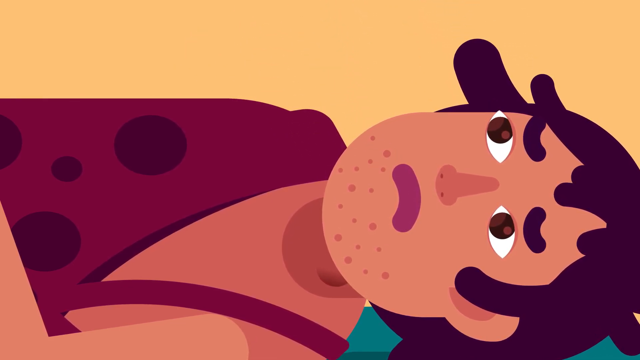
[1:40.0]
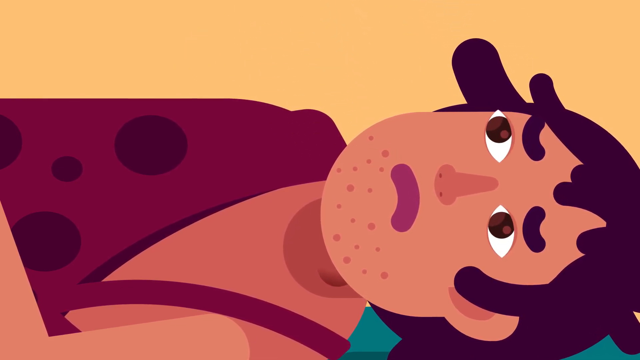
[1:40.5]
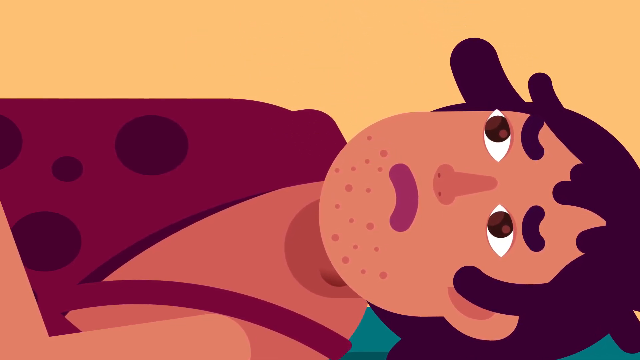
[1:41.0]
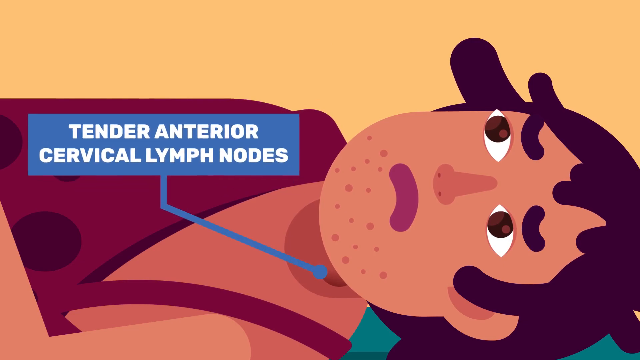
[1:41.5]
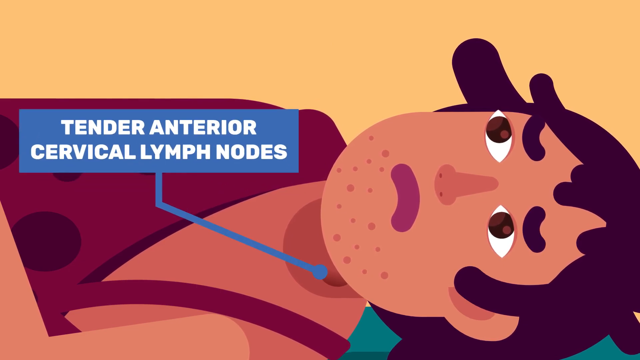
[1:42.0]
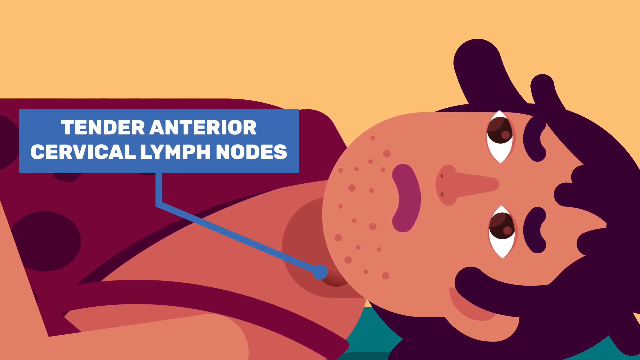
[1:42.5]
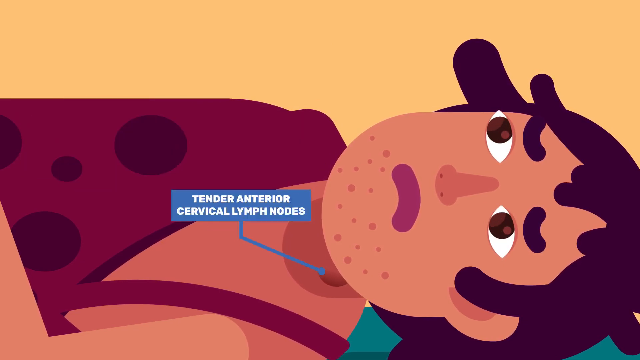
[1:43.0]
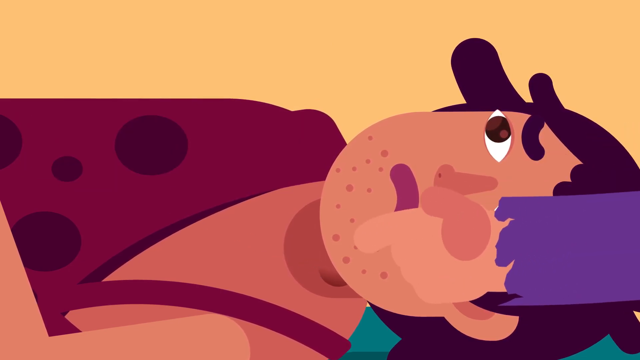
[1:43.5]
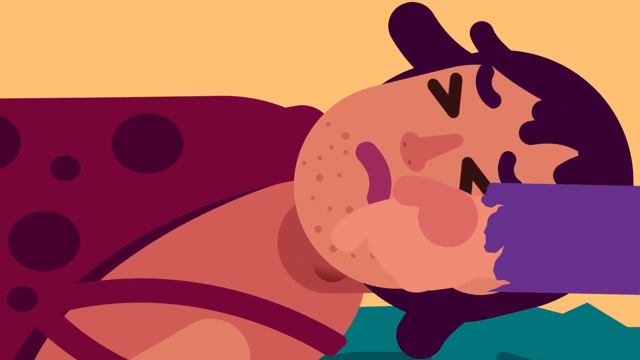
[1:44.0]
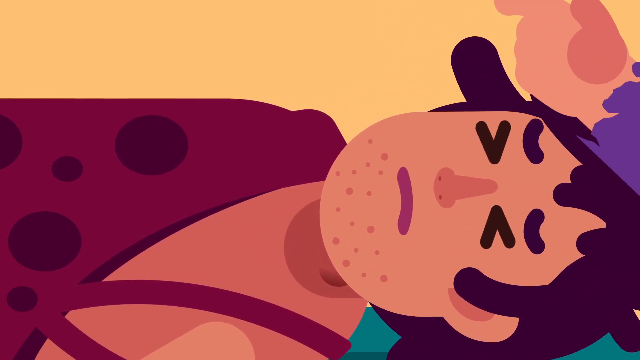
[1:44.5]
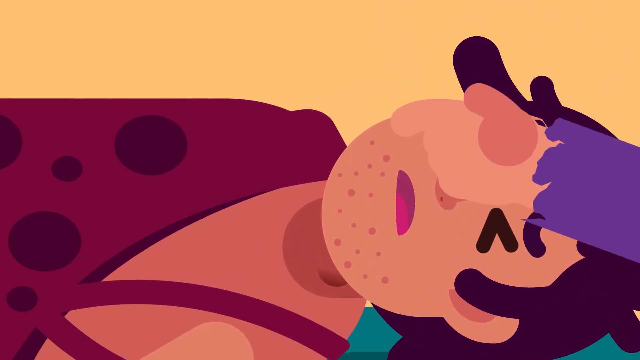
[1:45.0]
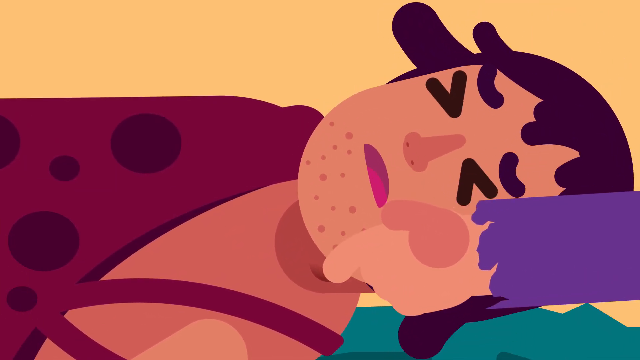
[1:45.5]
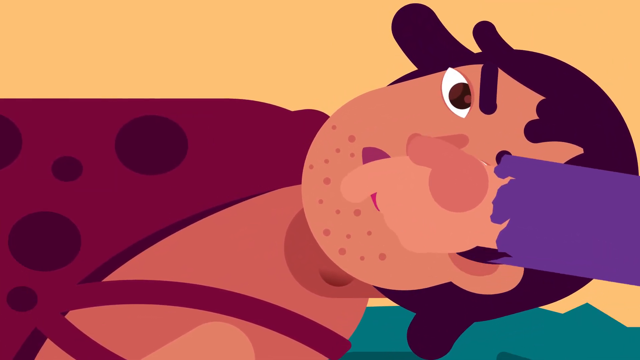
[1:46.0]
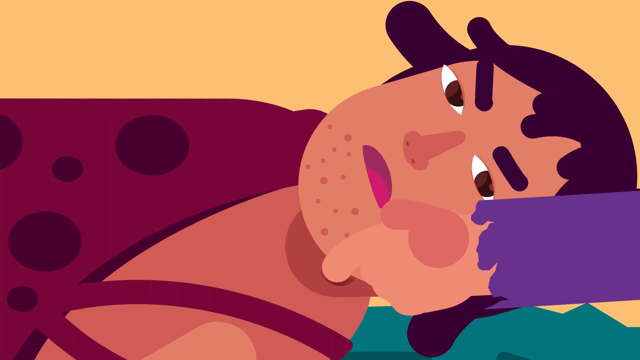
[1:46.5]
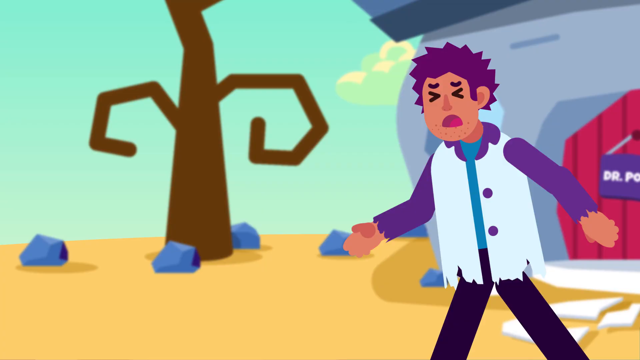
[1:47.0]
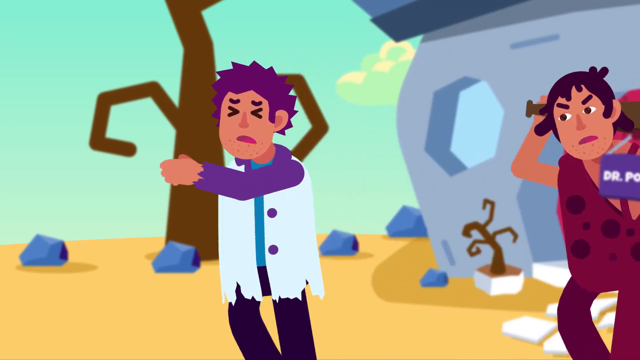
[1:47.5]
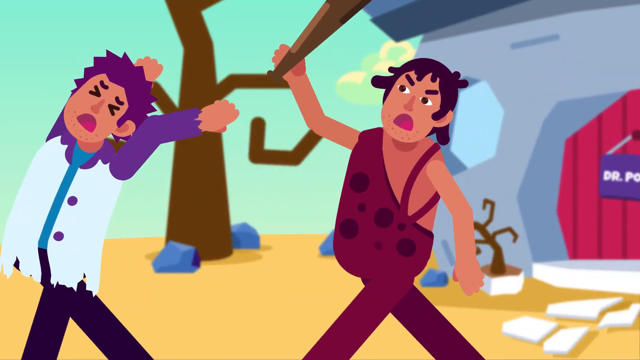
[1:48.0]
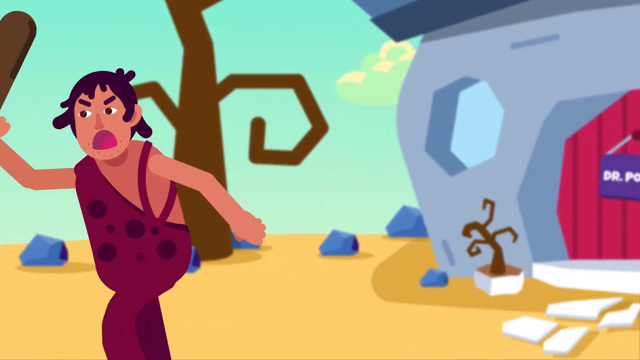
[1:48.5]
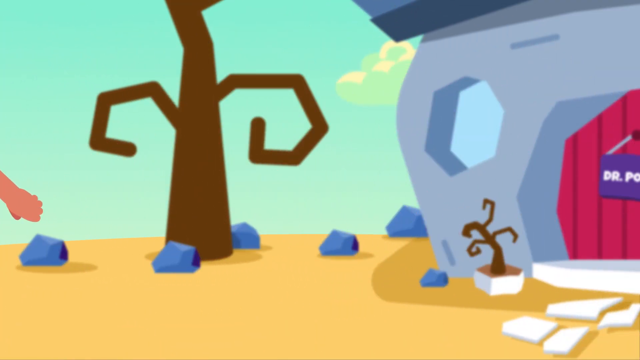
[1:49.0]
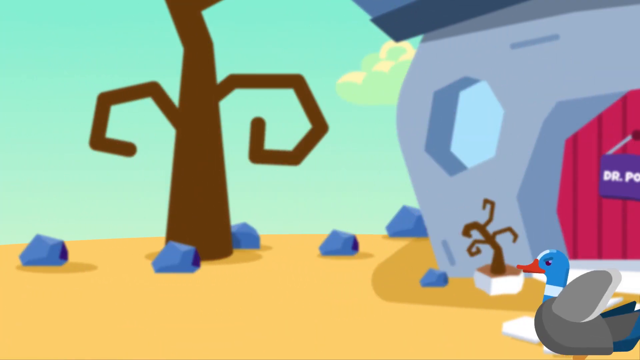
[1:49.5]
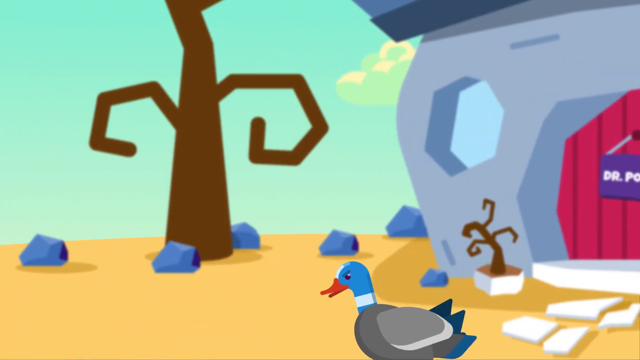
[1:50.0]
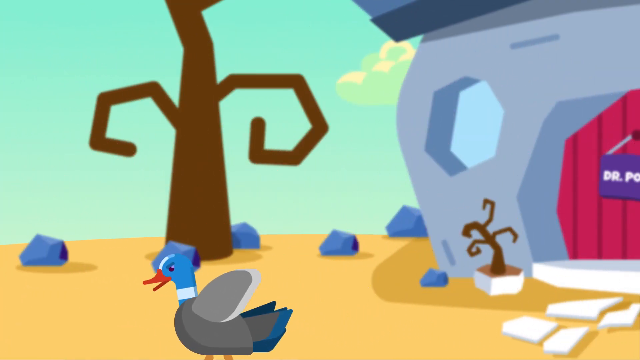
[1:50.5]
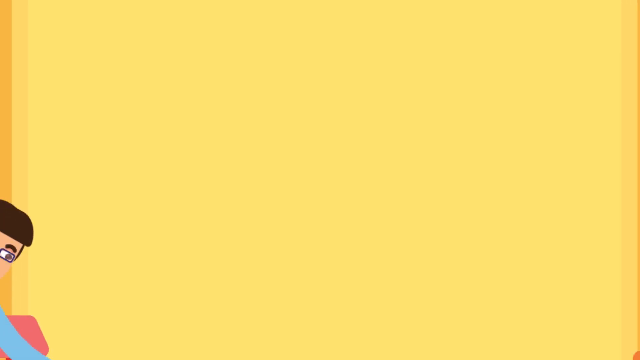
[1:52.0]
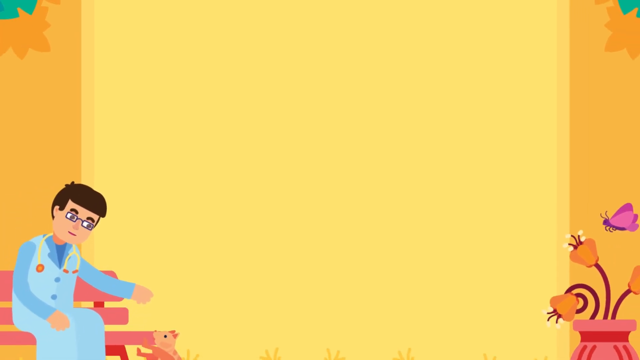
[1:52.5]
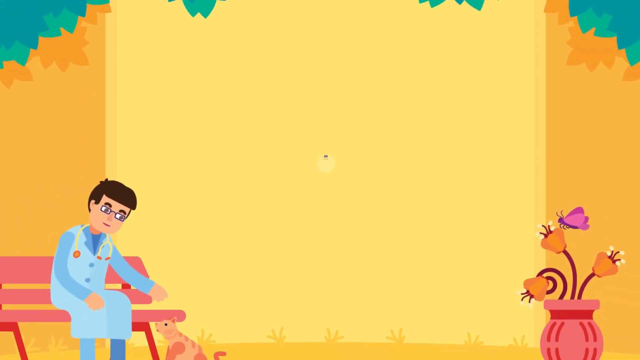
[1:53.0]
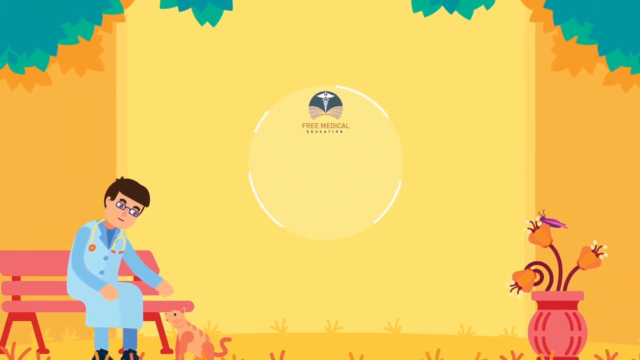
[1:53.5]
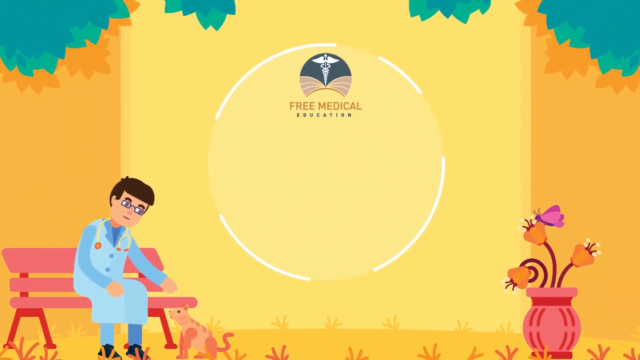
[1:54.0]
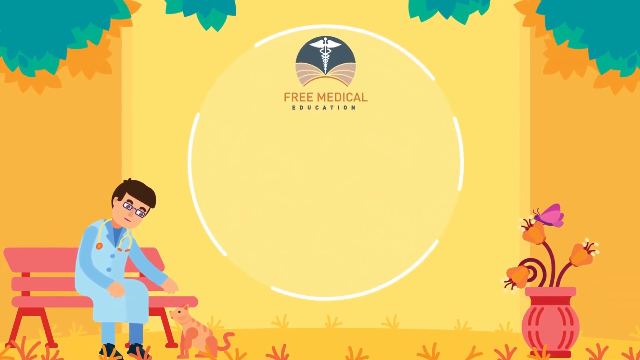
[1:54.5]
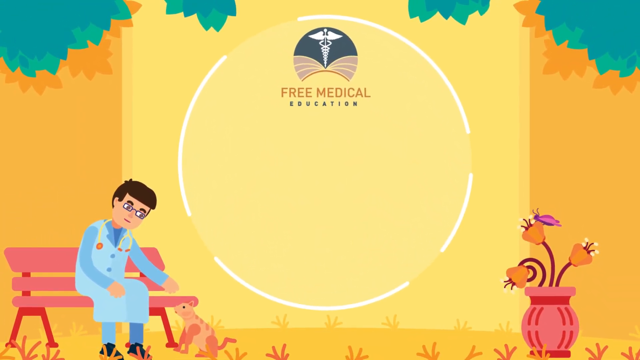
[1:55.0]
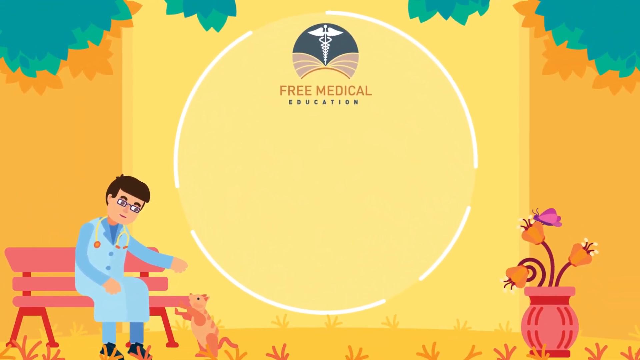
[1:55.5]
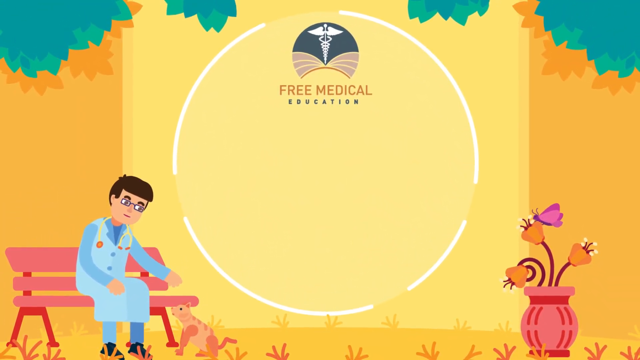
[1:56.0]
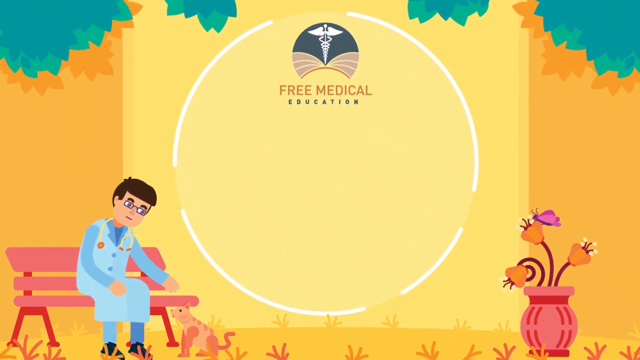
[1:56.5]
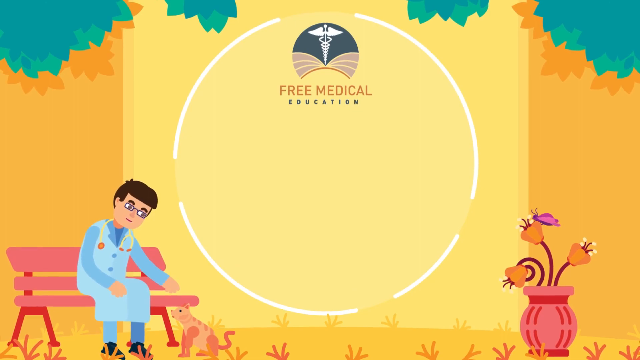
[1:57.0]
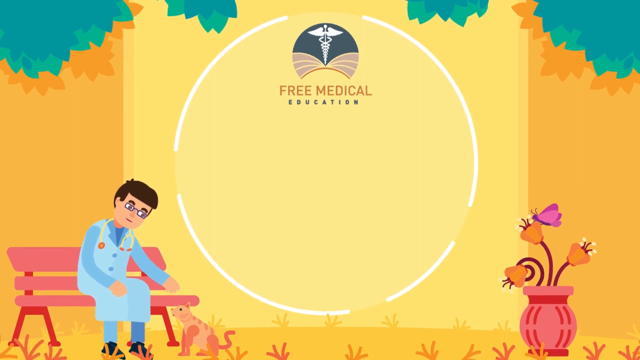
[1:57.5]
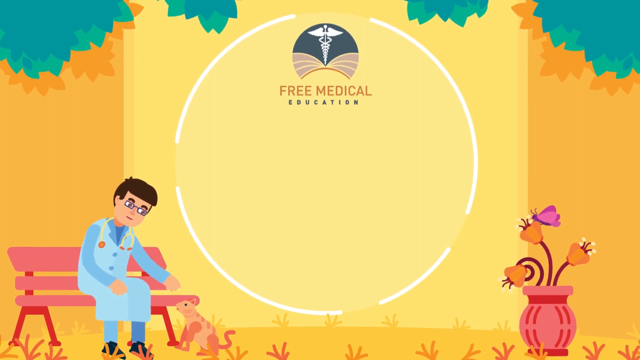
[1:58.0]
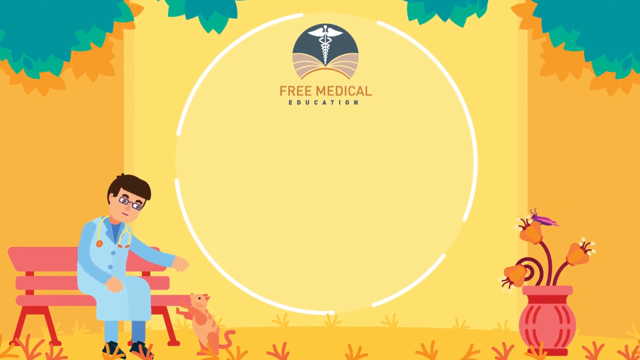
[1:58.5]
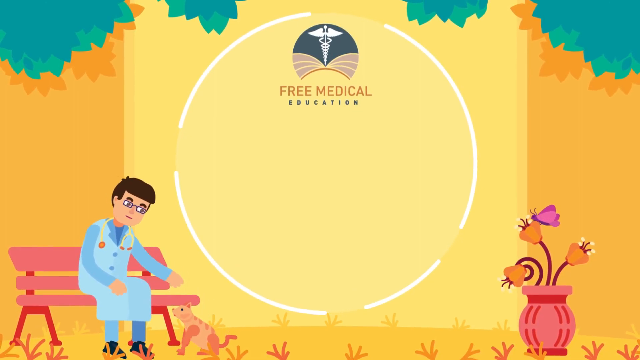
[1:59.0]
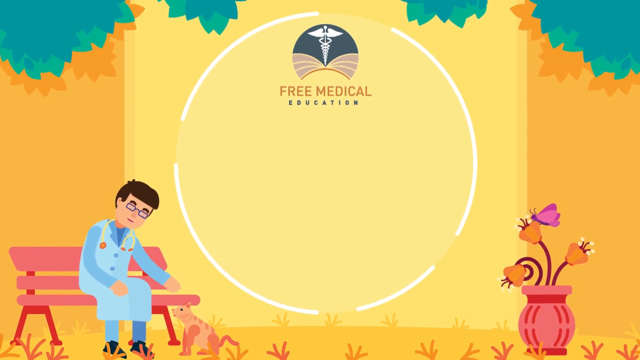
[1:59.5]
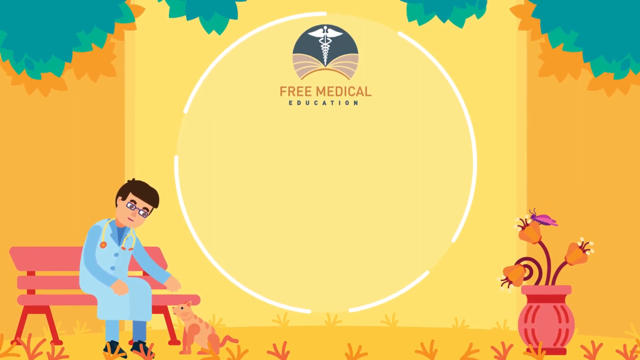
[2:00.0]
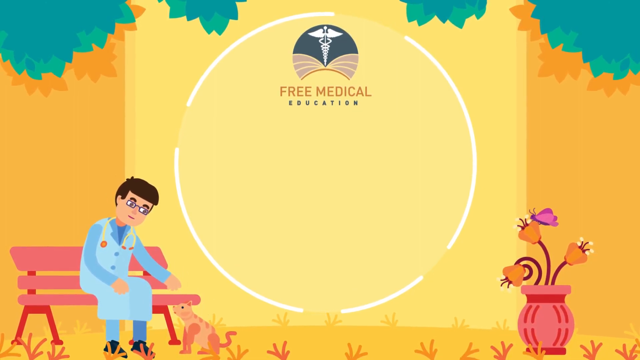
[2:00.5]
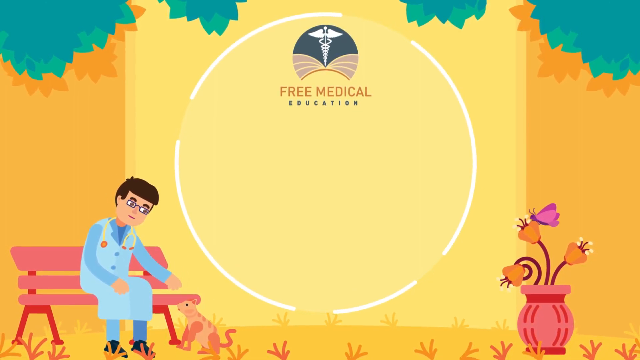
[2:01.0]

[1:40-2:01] The patient lies on the bed looking very sick and sad. A bullet point with a line comes out of the patient's throat, leading to a box with white text that says "tender anterior cervical lymph nodes." The examiner pokes at the lymph nodes a couple of times, and the patient flinches in pain. The sick person then chases the examiner outside with a large club, and the duck follows after them. The video ends with an animated outdoor scene of a doctor petting a cat. The logo from the beginning appears on screen with "free medical education." A small pink flower pot with orange flowers and a purple and pink butterfly is on the right side of the last scene.